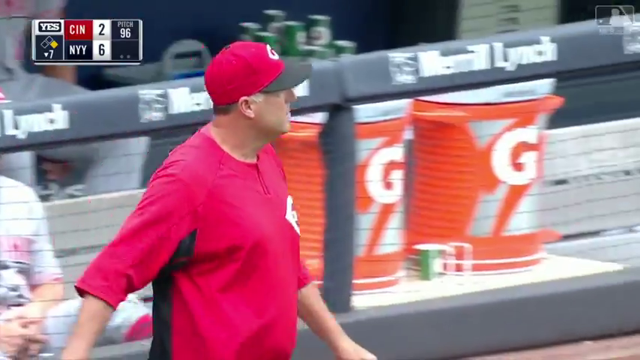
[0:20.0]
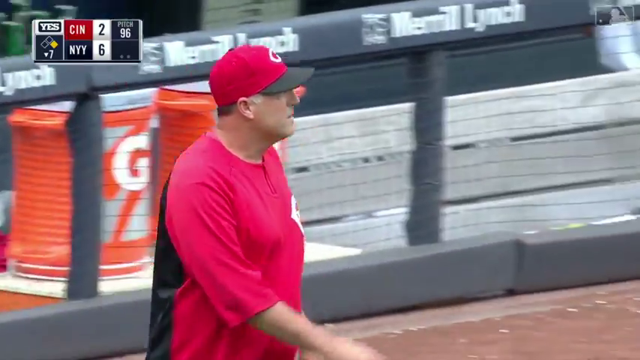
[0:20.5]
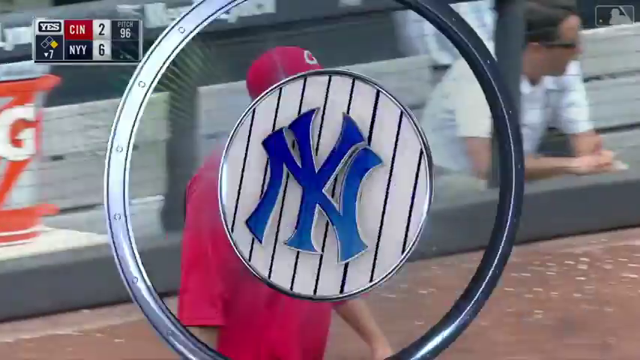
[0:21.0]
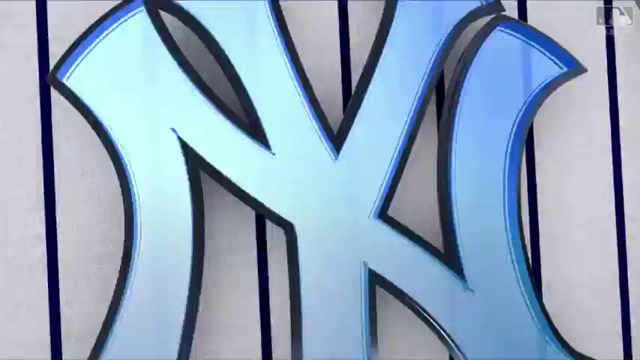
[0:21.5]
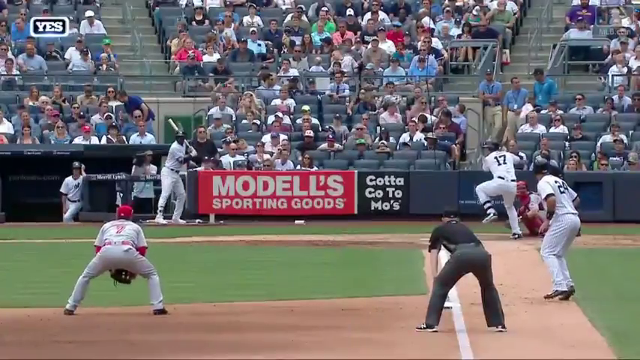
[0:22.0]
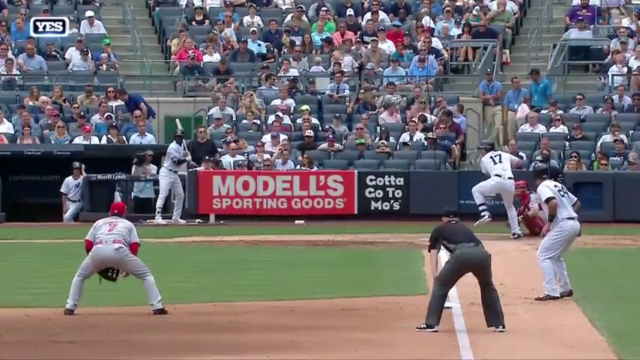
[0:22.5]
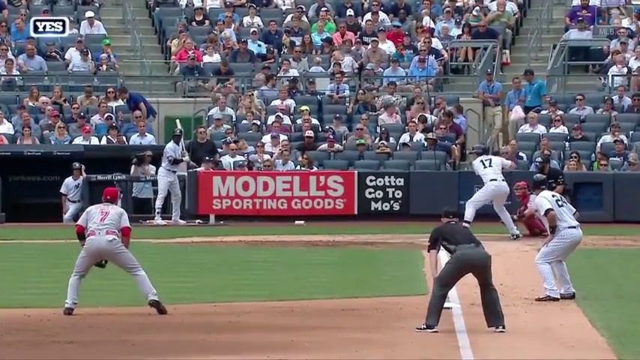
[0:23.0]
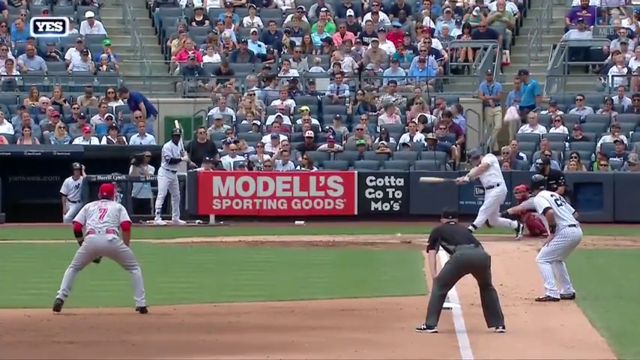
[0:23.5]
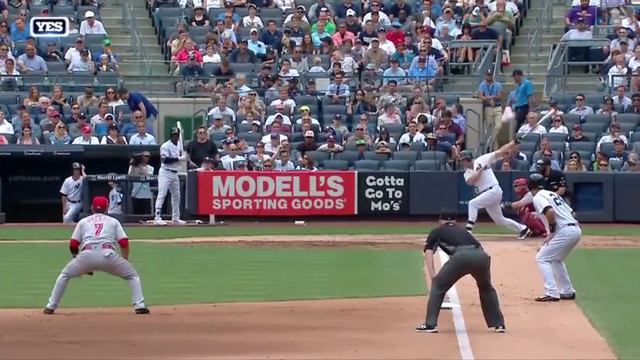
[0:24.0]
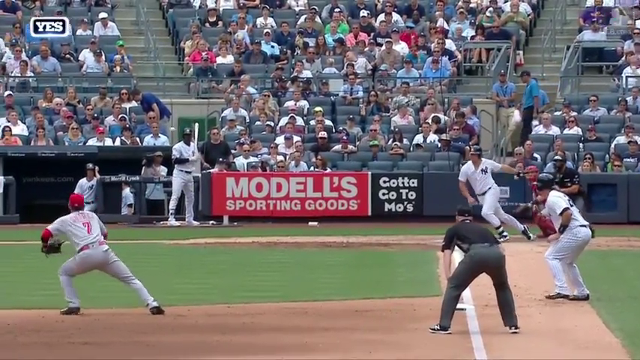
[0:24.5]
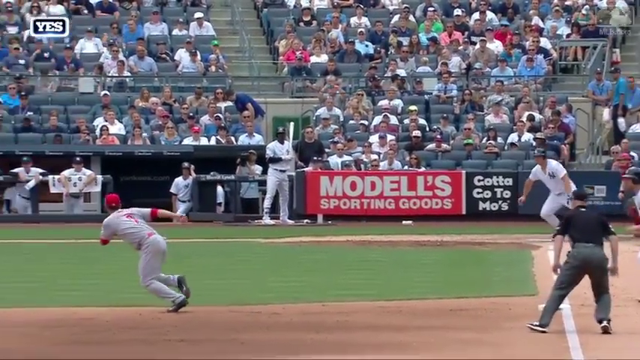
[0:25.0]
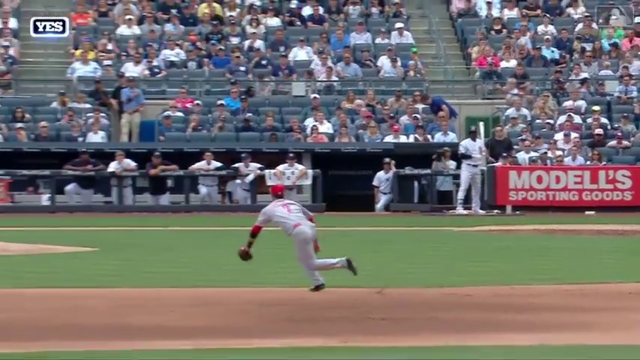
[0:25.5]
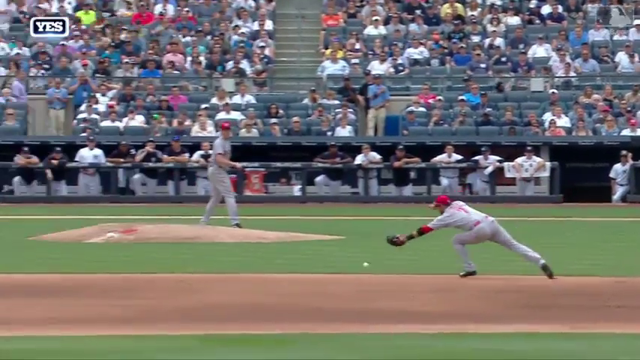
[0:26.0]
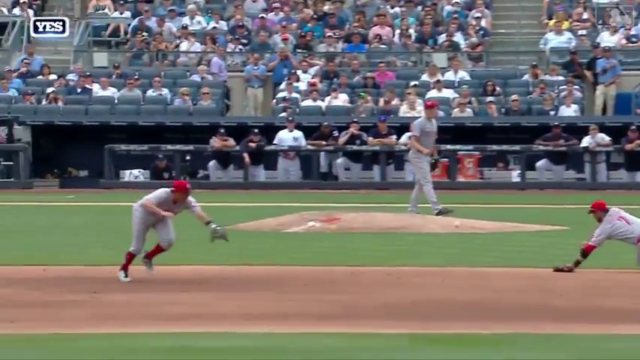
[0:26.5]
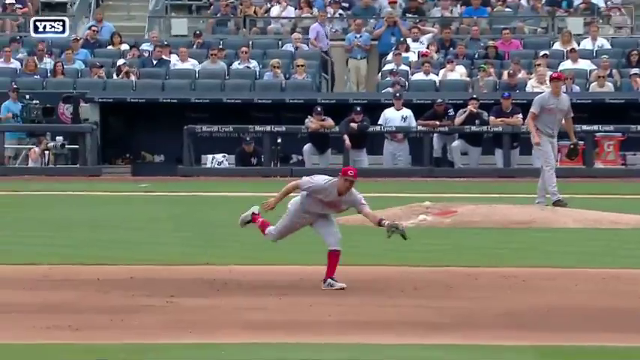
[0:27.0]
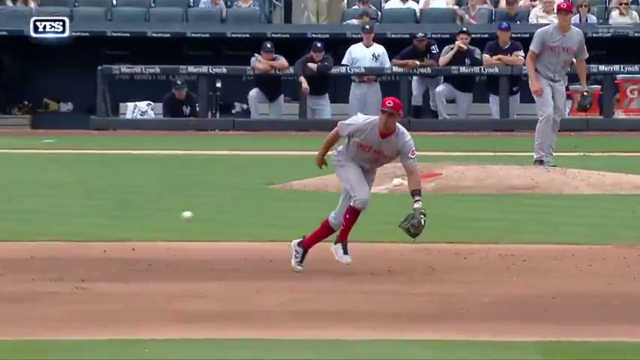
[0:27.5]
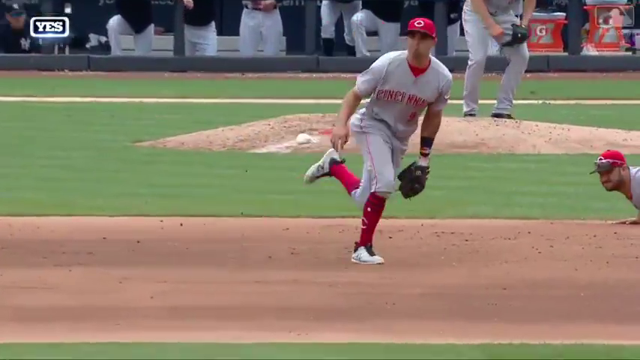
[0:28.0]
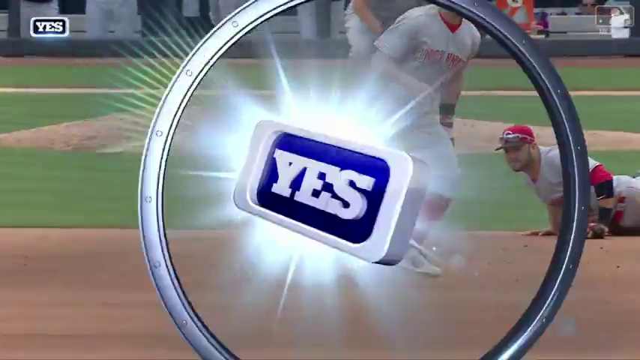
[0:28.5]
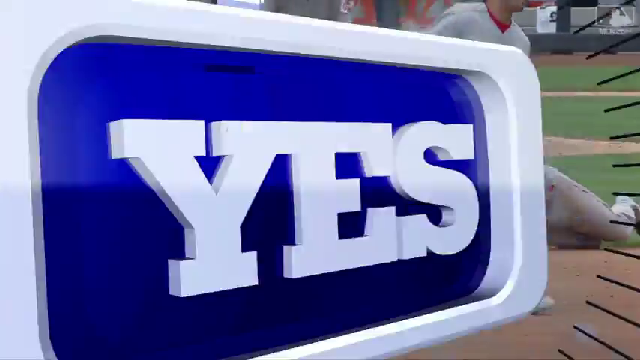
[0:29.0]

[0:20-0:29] The Cincinnati Reds coach, wearing a red cap and a red top, comes out of the dugout and sort of makes his way toward the mound to replace the pitcher. A New York Yankees logo comes to the center of the screen and then kind of disappears. The view then looks down the third base line into the batter's box. The third baseman is in a stance, ready to field a play if the ball is hit to him, the runner on third takes his lead, the umpire is in his stance, and the hitter, number 17, gets ready to swing. In slow motion, the ball comes in, he swings, and the ball goes between the third baseman and the shortstop. A zoomed-in look follows of the runner on first base, looking into what looks to be his dugout.